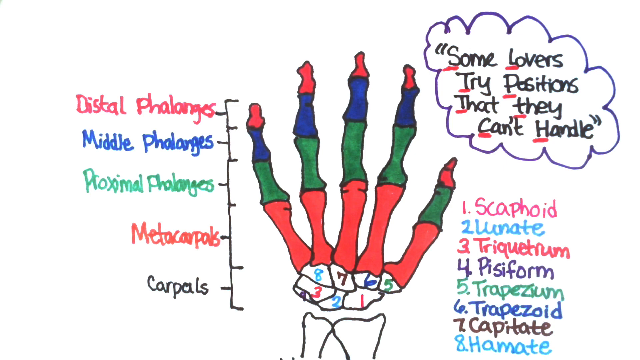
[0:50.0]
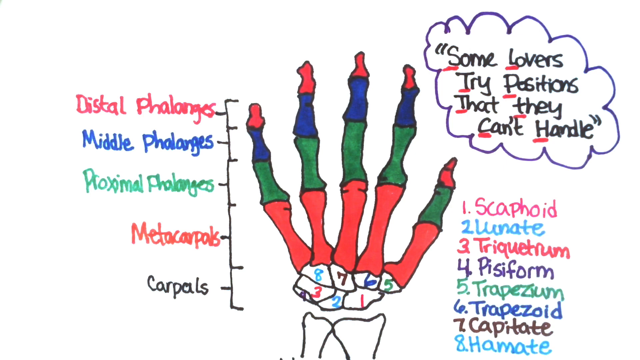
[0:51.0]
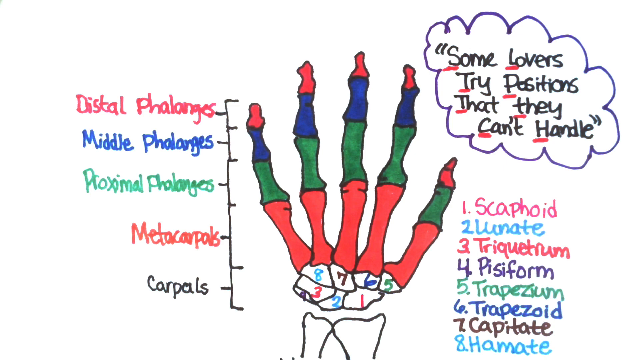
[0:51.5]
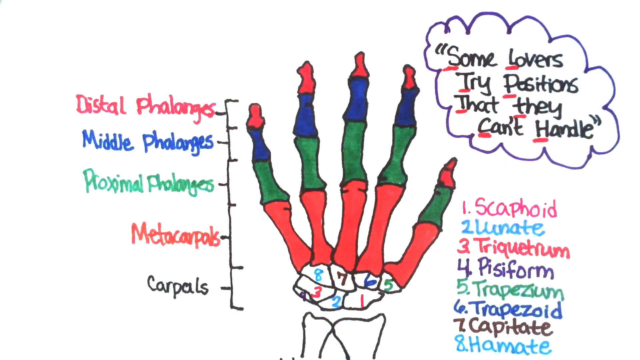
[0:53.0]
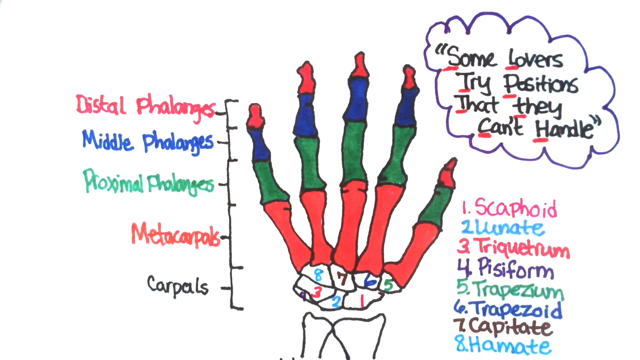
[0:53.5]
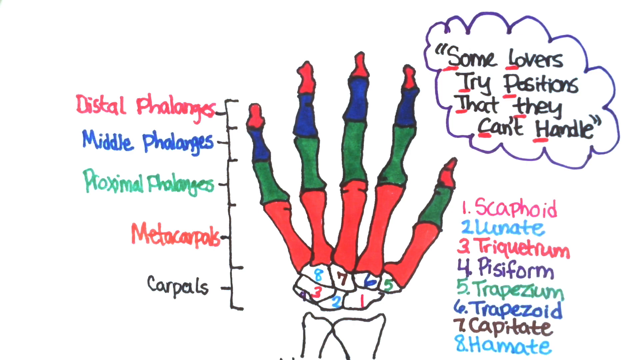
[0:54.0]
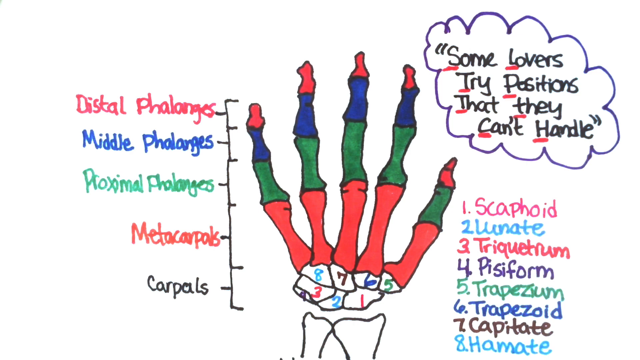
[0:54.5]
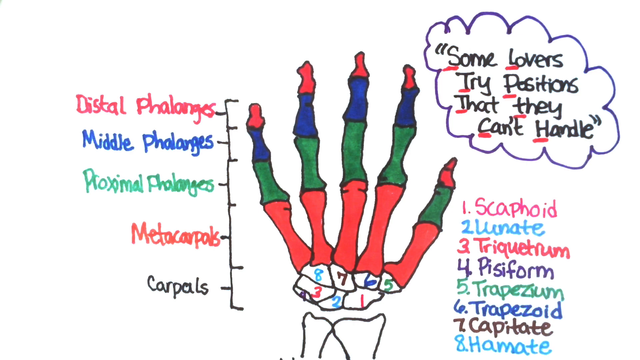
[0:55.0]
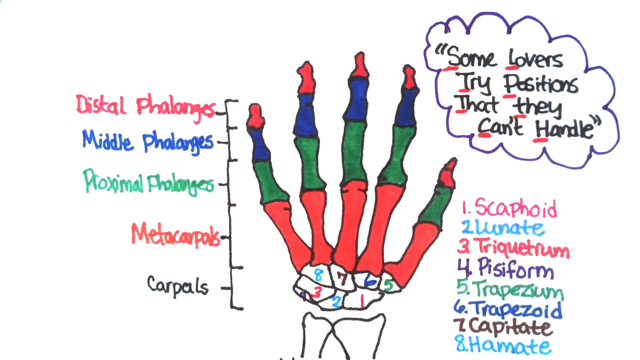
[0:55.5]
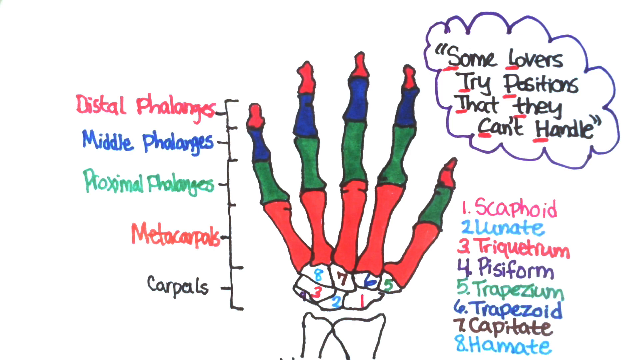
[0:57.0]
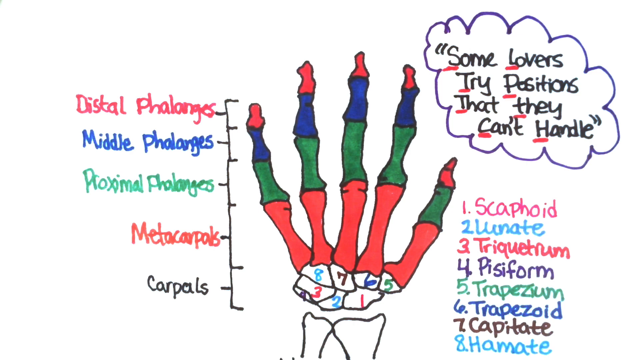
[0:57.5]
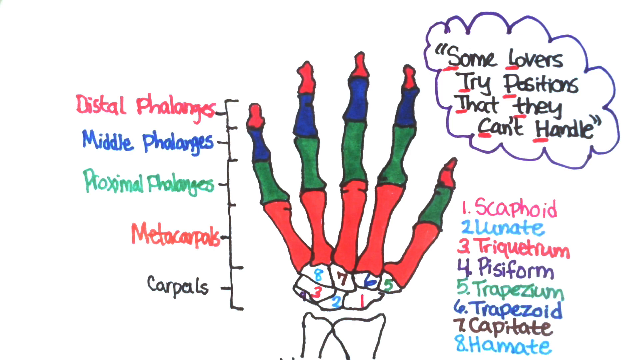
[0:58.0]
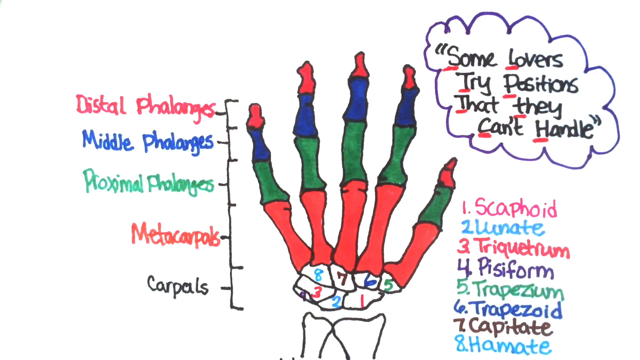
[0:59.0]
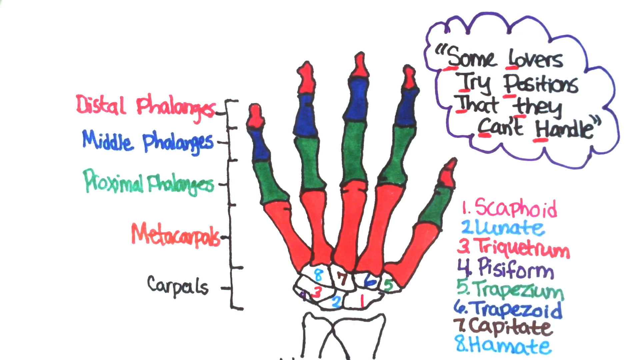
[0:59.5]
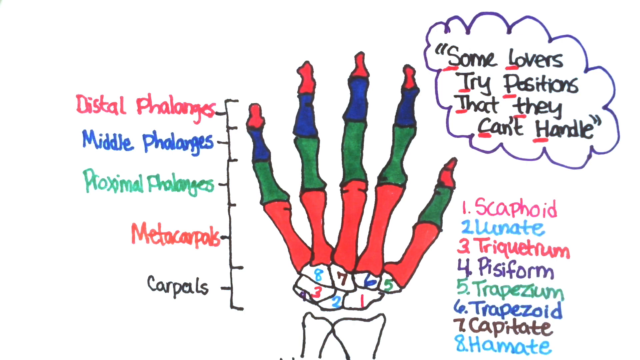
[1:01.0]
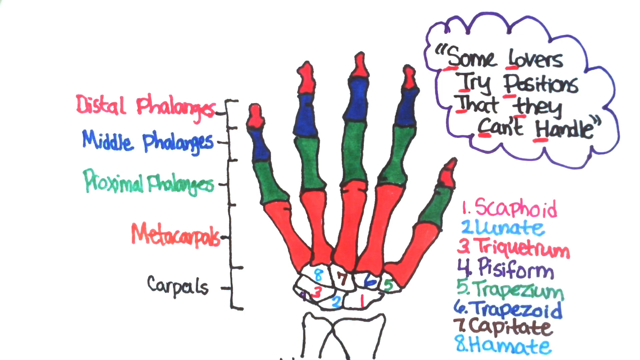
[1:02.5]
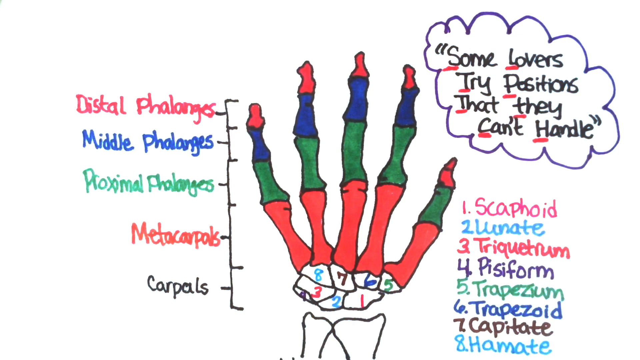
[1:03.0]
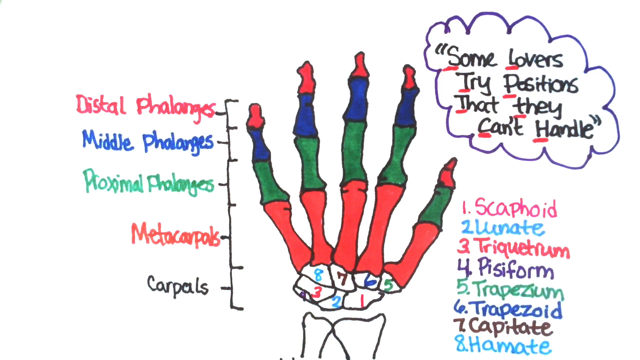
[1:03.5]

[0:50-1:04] The same picture stays on screen with nothing happening. On the right side, the labels are listed: the first, in pink, says "scaphoid"; the second, in light blue, "lunate"; the third, in red, "triquetrum"; the fourth, in purple, "pisiform"; the fifth, in green, "trapezium"; the sixth, in purple, "trapezoid"; the seventh, in black, "capitate"; and the eighth, in light blue, "hamate."